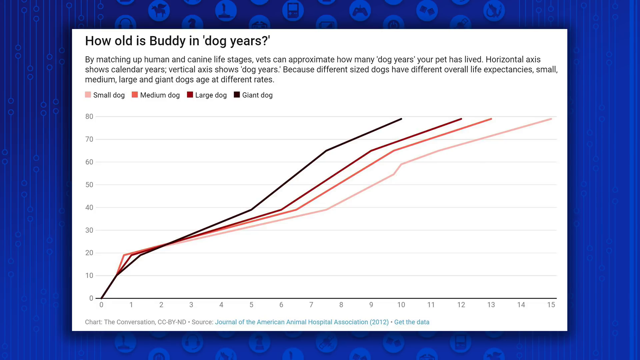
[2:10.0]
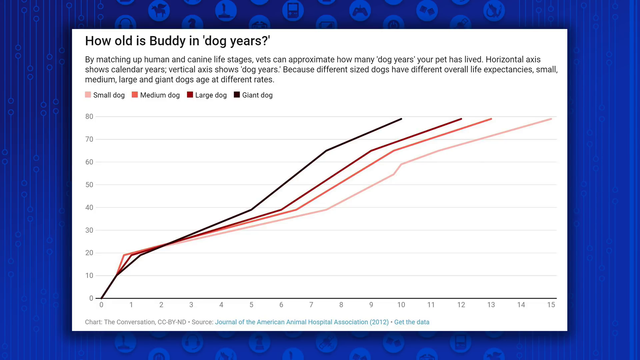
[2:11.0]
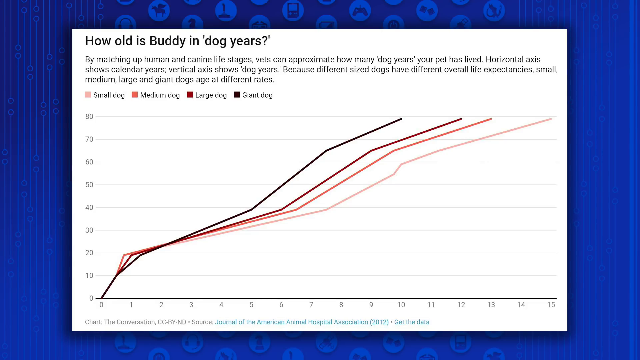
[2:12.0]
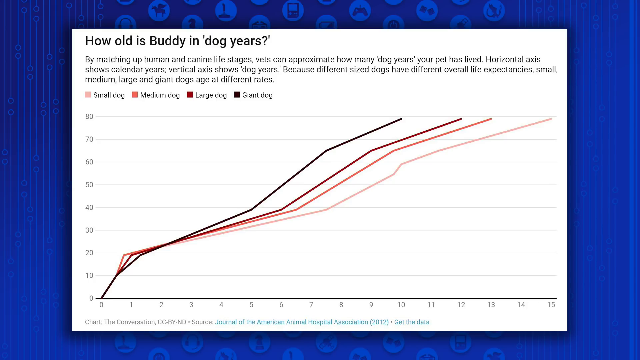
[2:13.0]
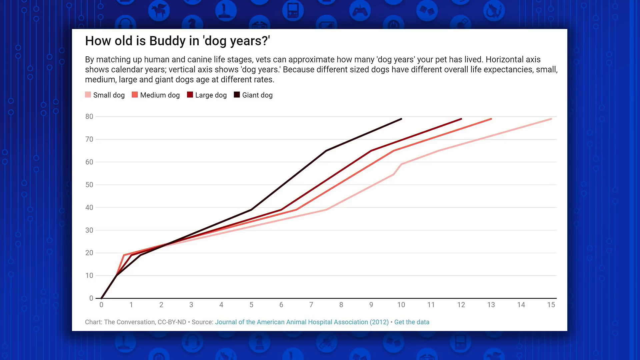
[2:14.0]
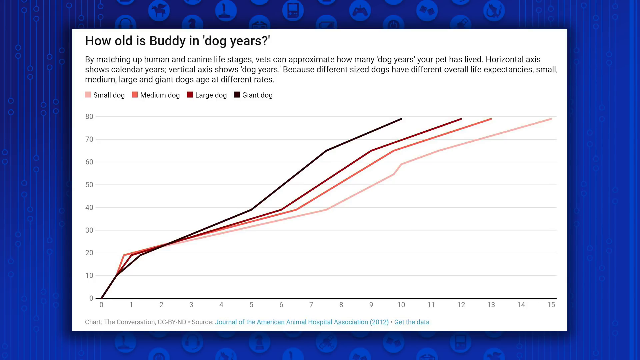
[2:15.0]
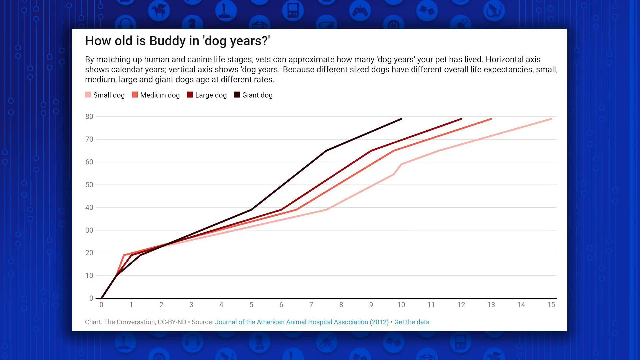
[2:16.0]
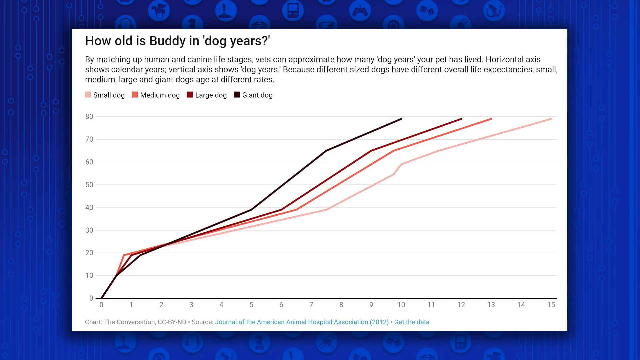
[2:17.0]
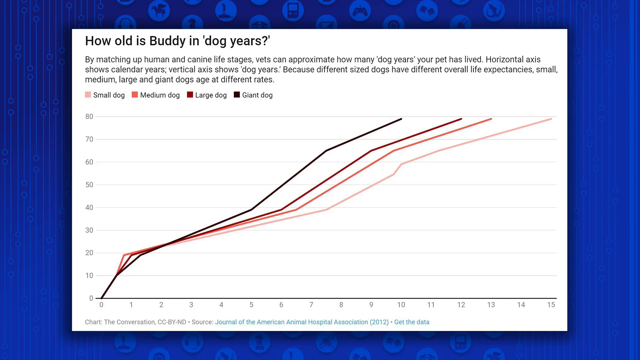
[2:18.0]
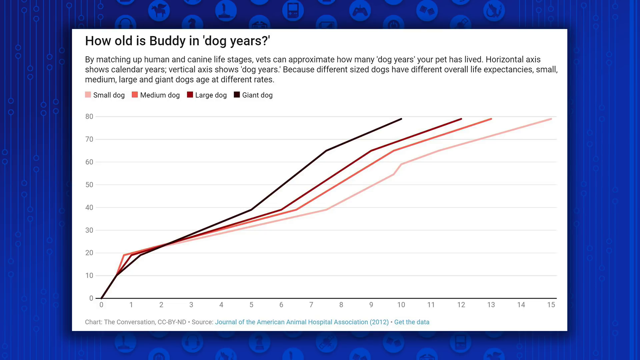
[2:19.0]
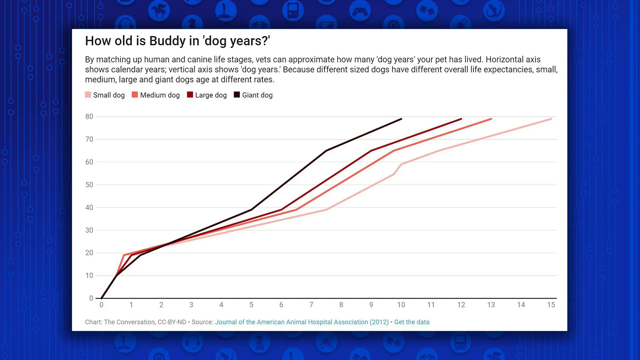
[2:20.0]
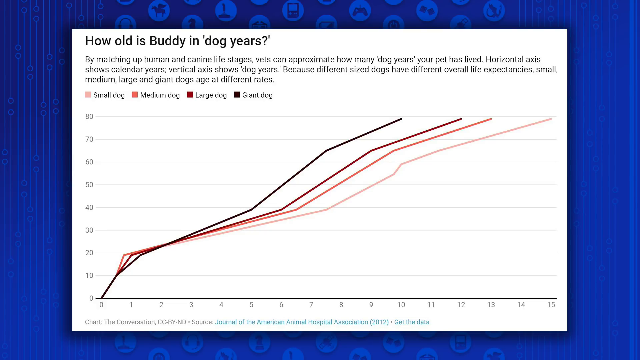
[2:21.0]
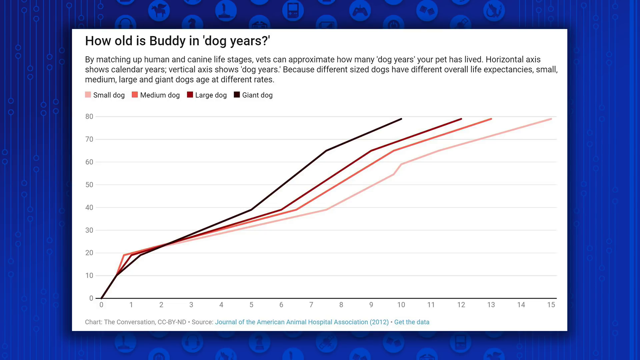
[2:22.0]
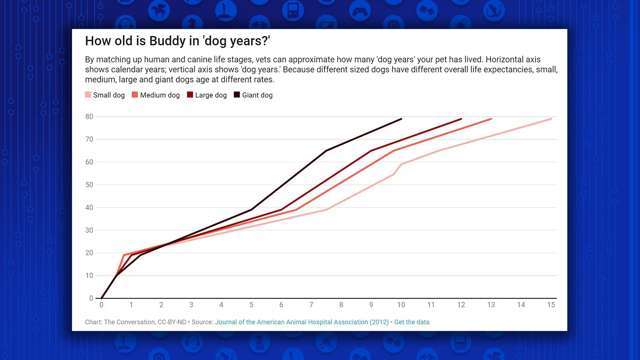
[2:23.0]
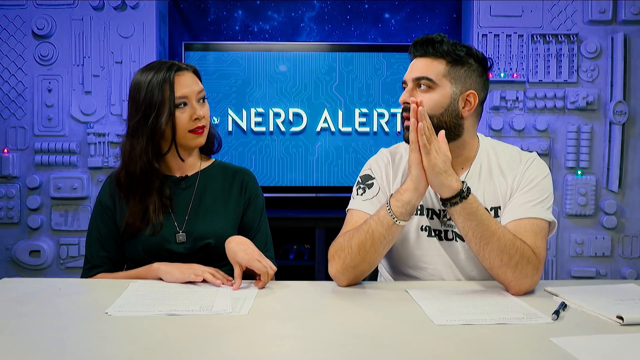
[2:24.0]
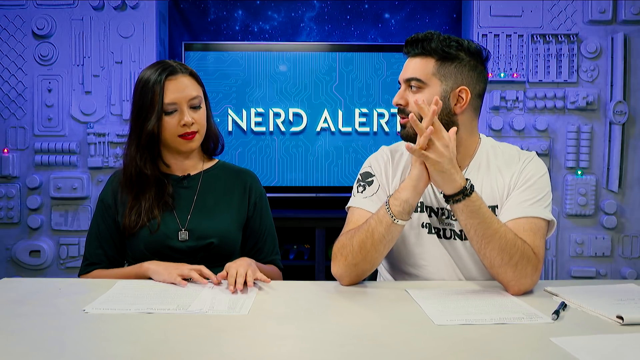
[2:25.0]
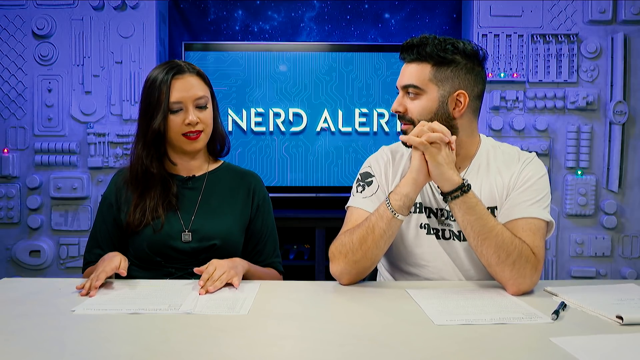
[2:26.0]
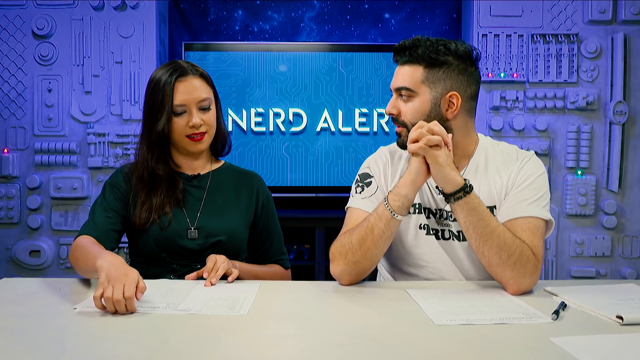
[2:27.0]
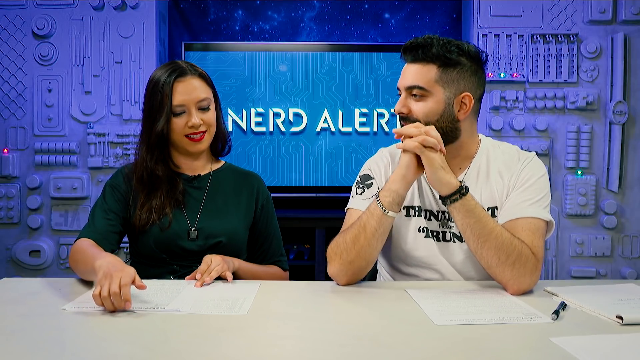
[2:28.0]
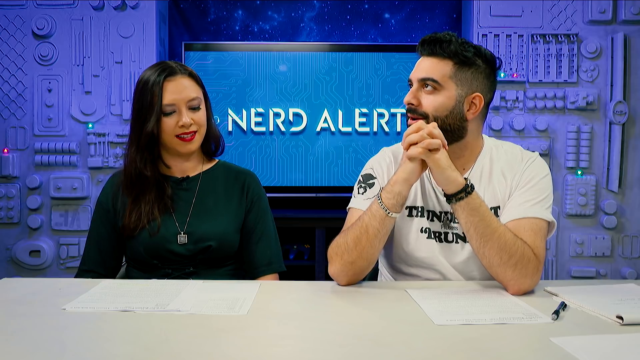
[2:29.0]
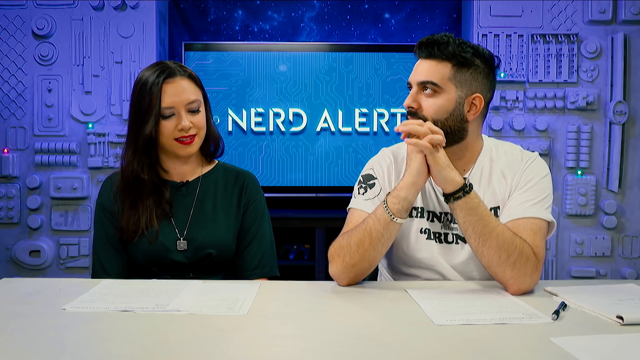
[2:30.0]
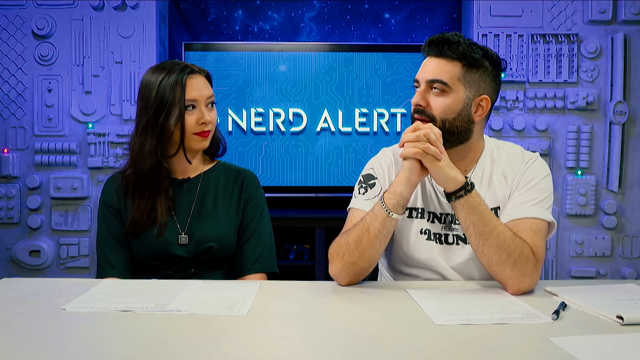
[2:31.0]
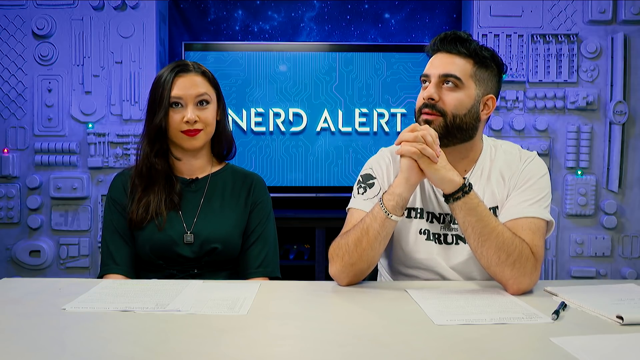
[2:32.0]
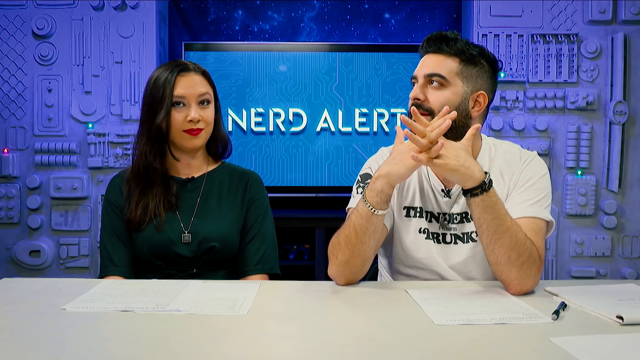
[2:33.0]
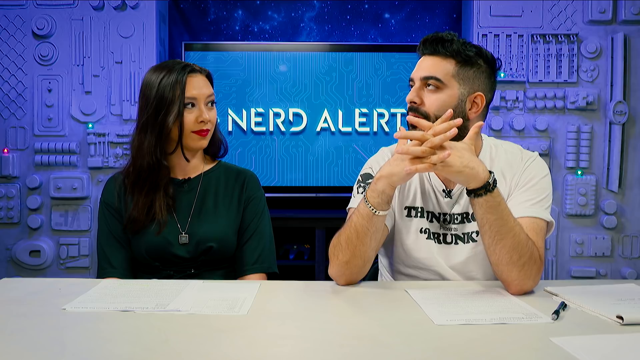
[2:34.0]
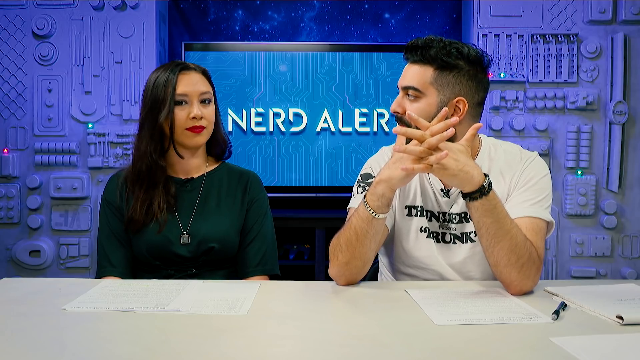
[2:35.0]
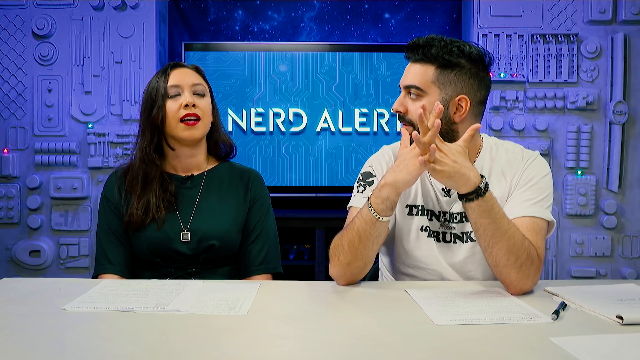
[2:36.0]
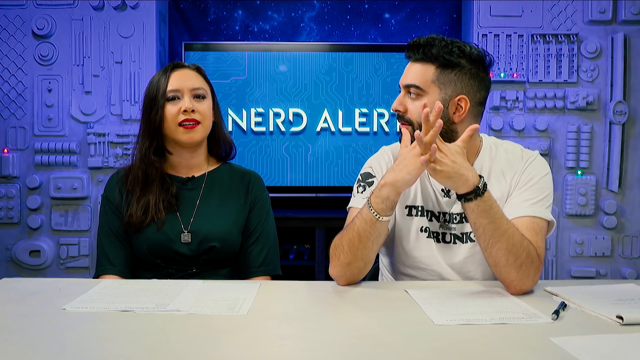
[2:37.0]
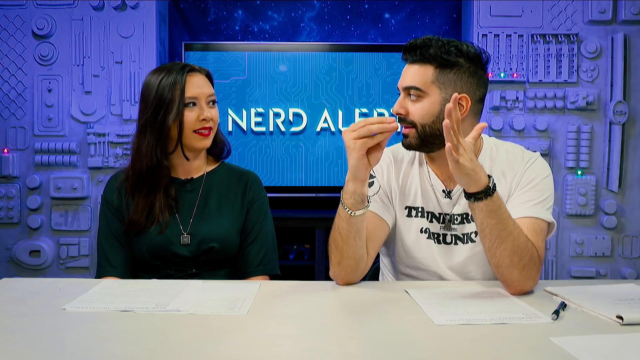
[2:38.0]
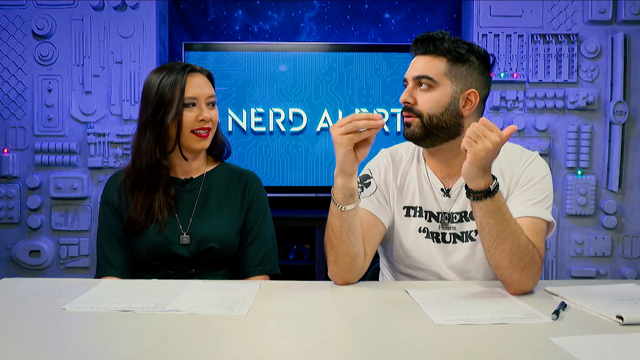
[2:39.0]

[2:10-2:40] A graph shows black, burgundy, orange and peach lines representing giant, large, medium and small dogs respectively. The vertical axis shows dog years and the horizontal axis shows calendar years. The graph's background is white, set on a blue background with small icons. A close-up then shows the woman in a dark green top, a necklace and red lipstick touching the papers on the white table, looking at them and trying to make them look presentable. The man holds his hands and looks at her as she smiles back. He then looks up at the roof, moves his fingers and explains further, opening his palm and making shapes with his fingers as he talks. He wears a silver bracelet on his right hand and a black wristwatch on his left. The background is blue, with a screen reading "Nerd Alert", and behind it is a white area that looks like the inside of an electrical box, with a green flashing light and a red light on the right side, and green and red lights on the other side that are not flashing.